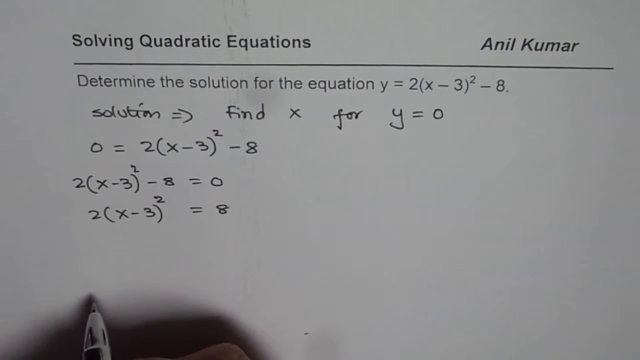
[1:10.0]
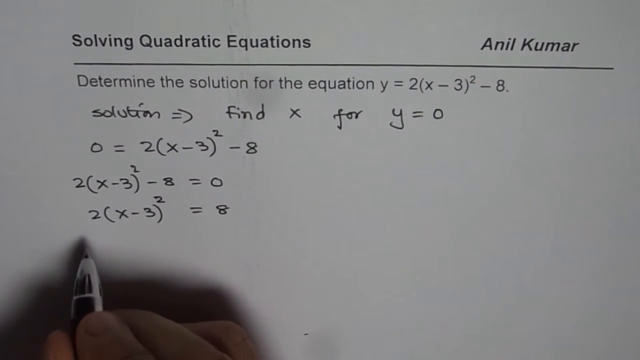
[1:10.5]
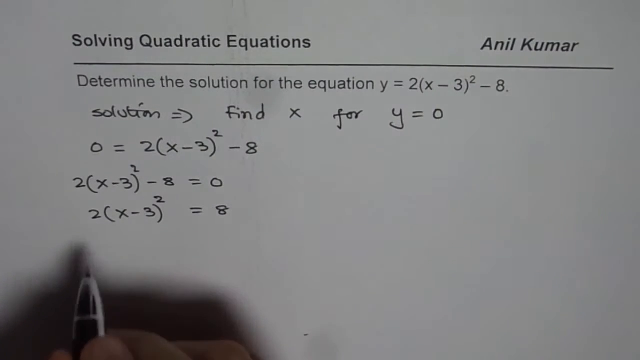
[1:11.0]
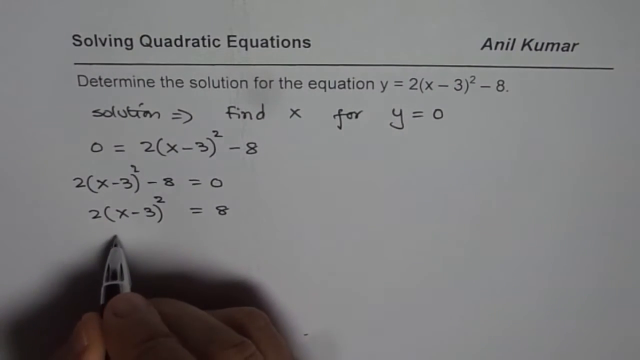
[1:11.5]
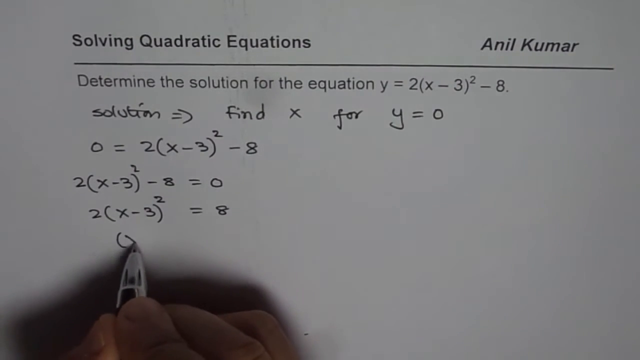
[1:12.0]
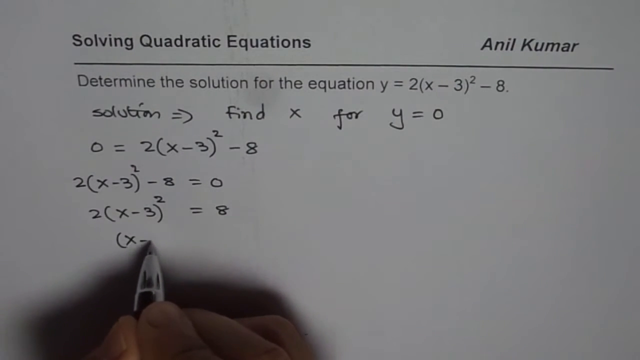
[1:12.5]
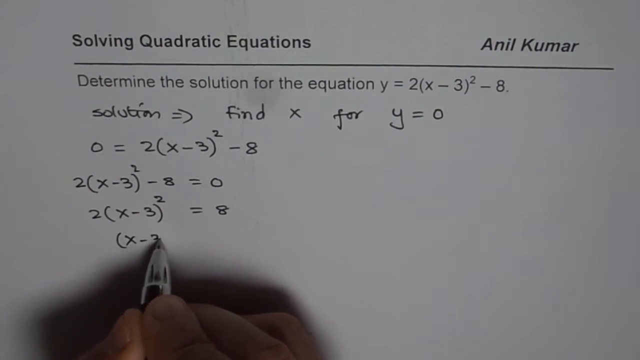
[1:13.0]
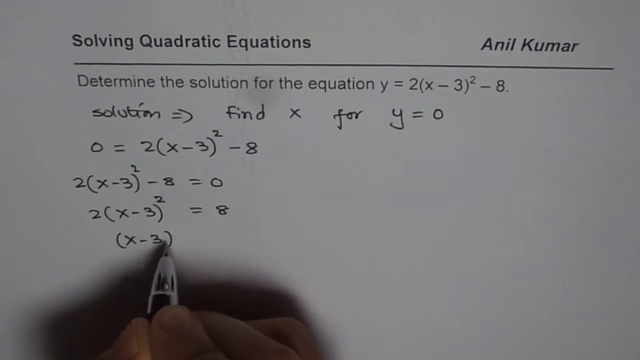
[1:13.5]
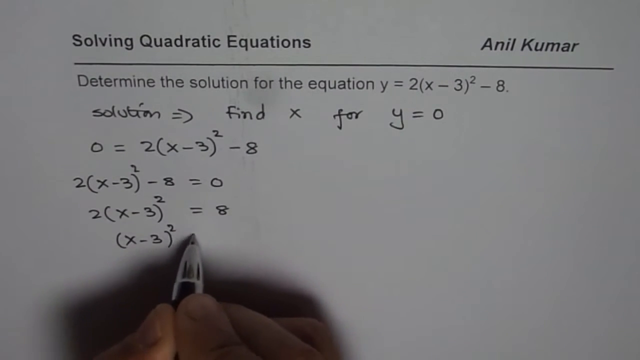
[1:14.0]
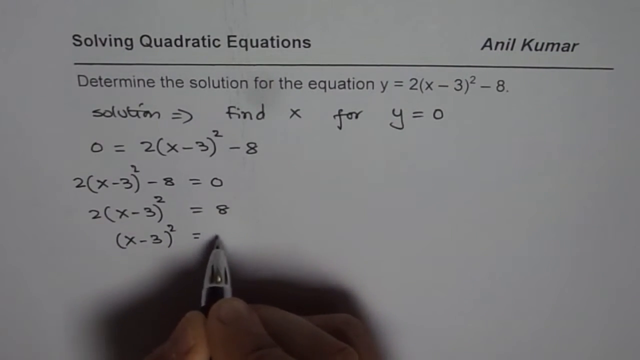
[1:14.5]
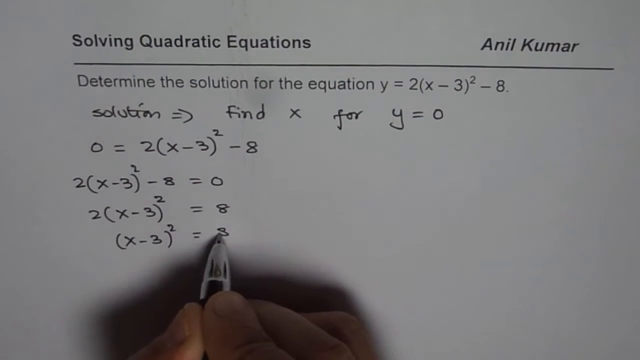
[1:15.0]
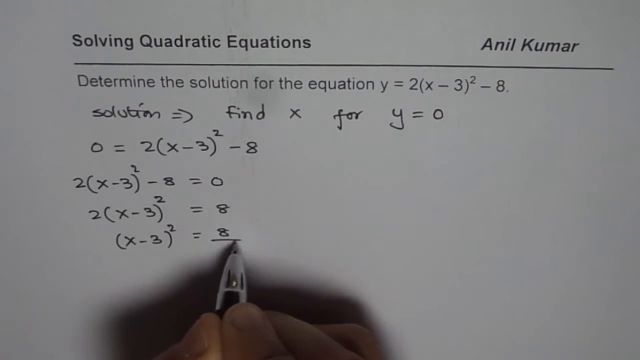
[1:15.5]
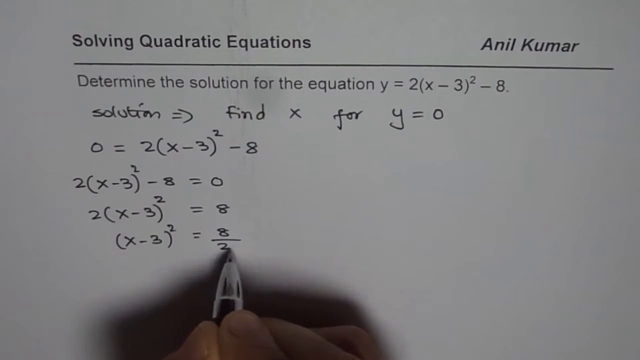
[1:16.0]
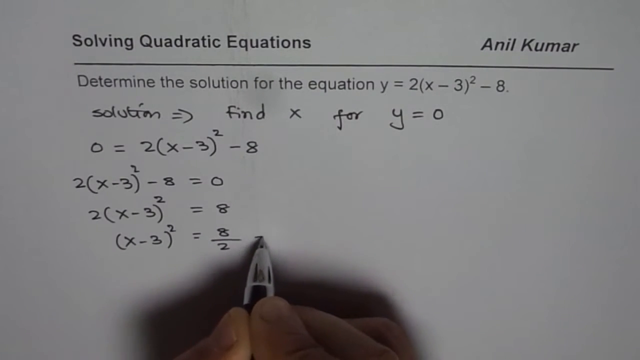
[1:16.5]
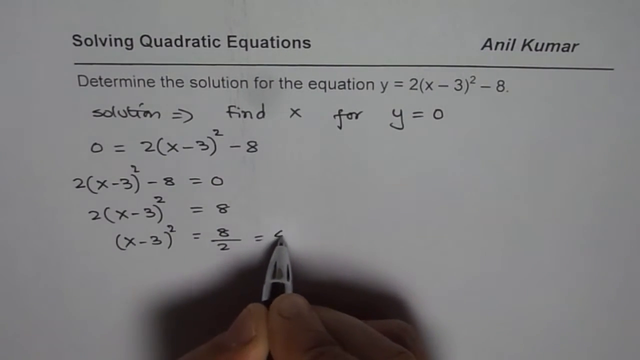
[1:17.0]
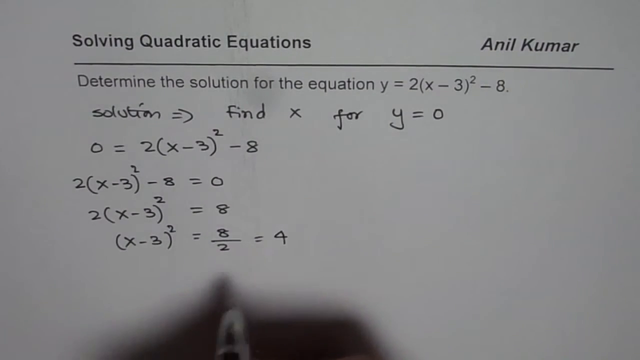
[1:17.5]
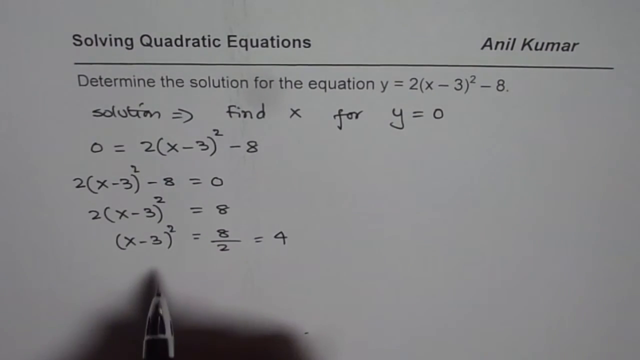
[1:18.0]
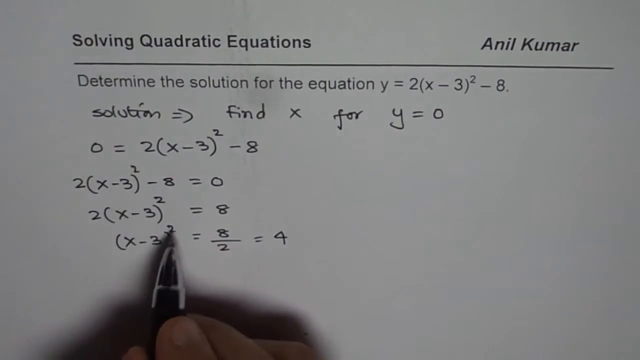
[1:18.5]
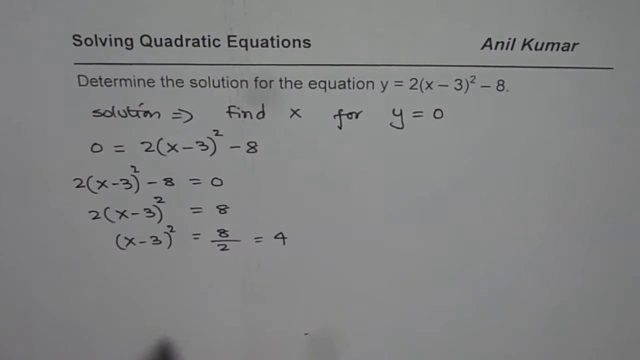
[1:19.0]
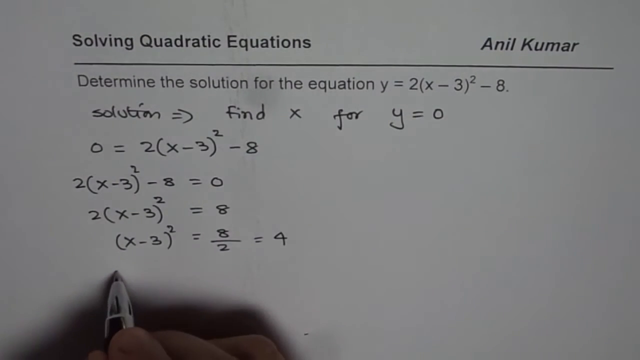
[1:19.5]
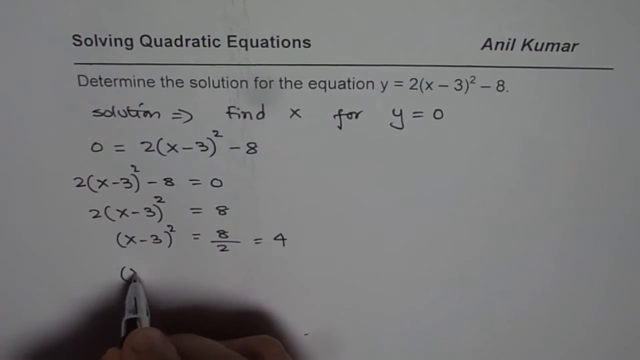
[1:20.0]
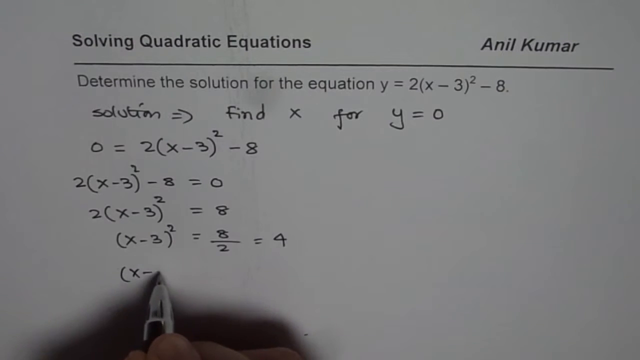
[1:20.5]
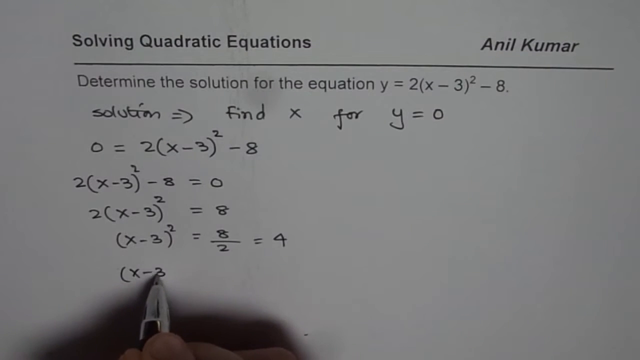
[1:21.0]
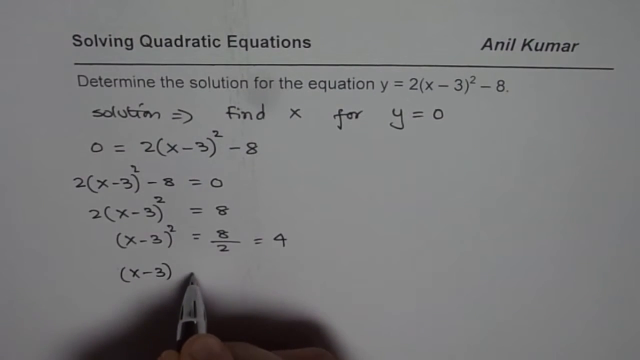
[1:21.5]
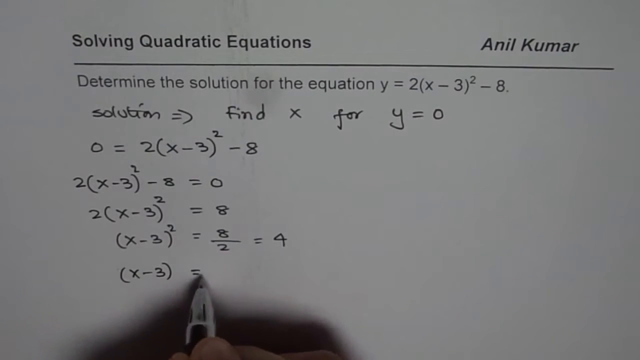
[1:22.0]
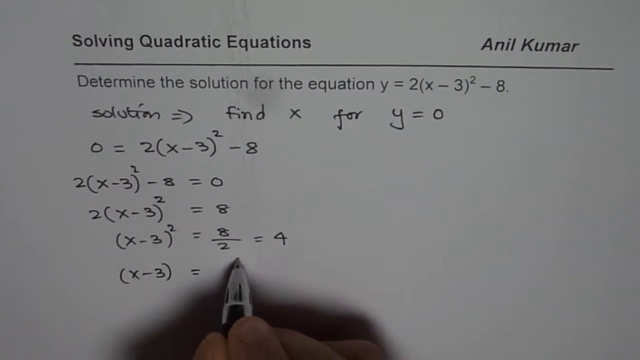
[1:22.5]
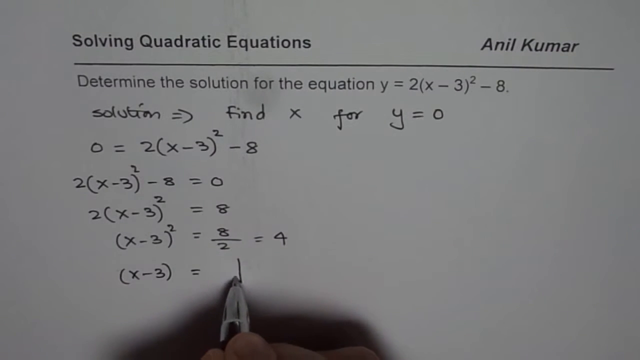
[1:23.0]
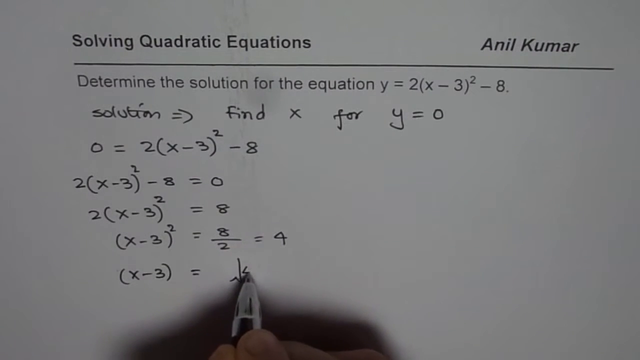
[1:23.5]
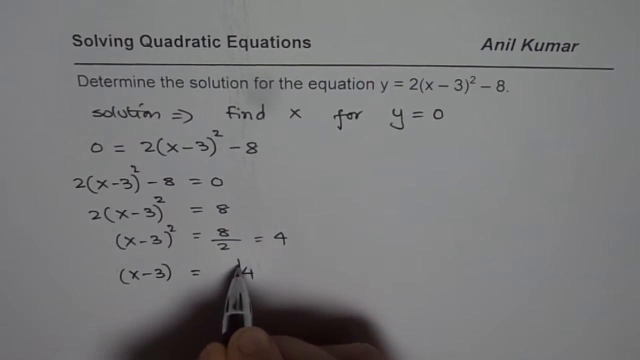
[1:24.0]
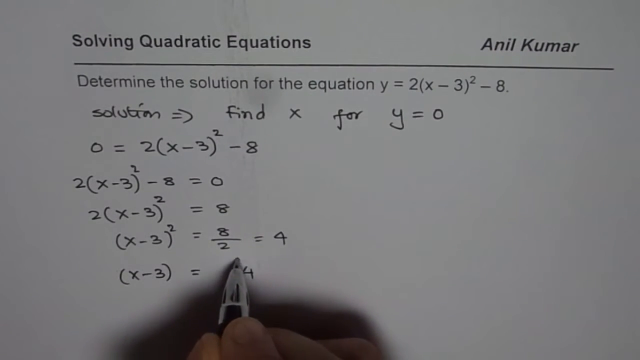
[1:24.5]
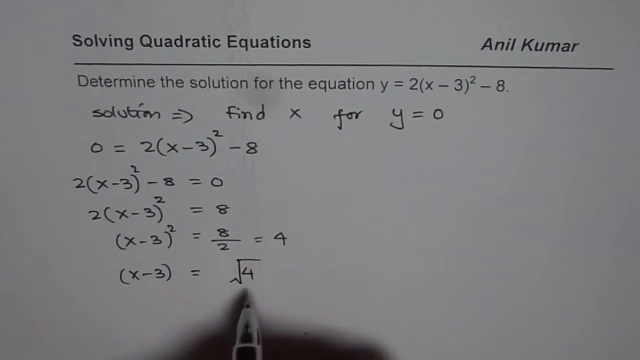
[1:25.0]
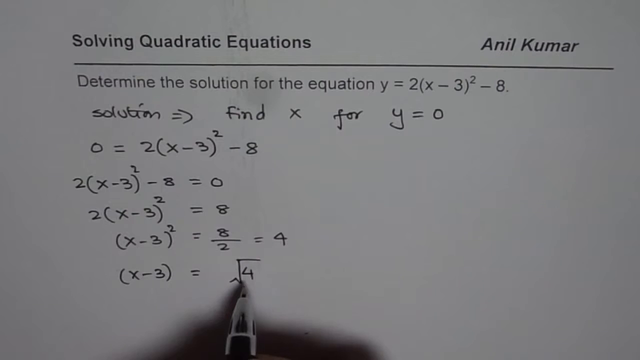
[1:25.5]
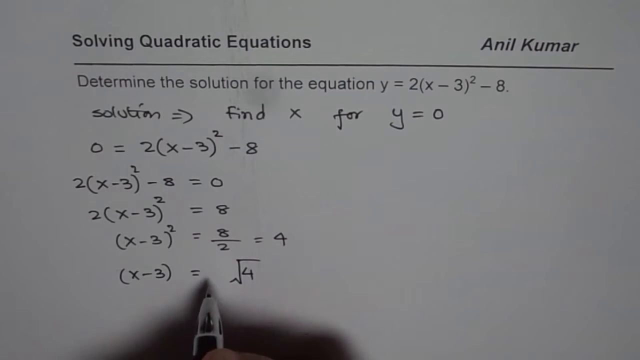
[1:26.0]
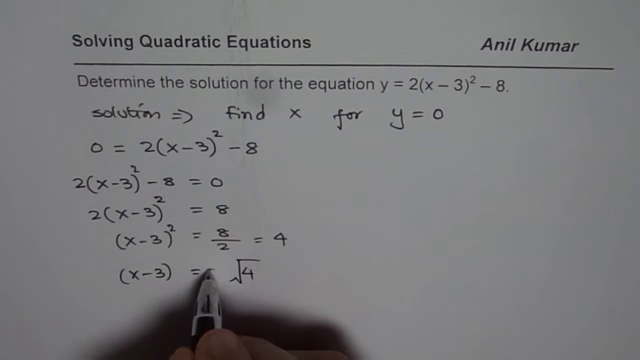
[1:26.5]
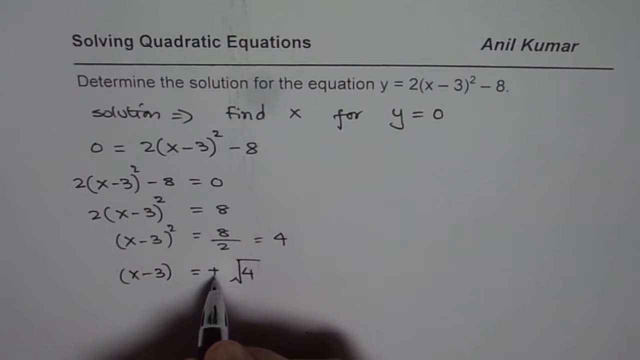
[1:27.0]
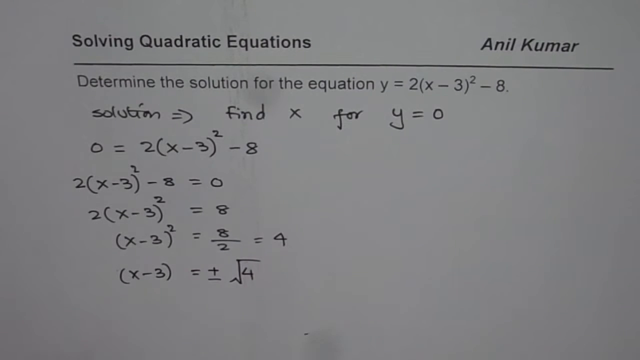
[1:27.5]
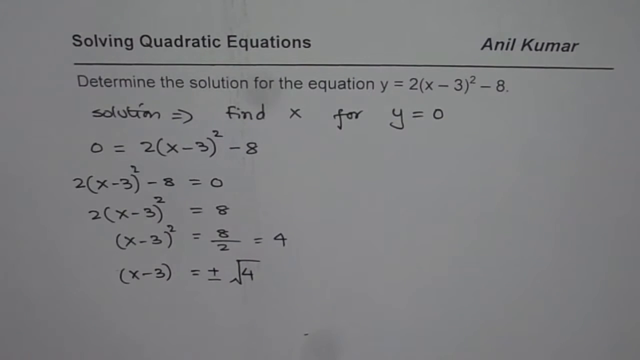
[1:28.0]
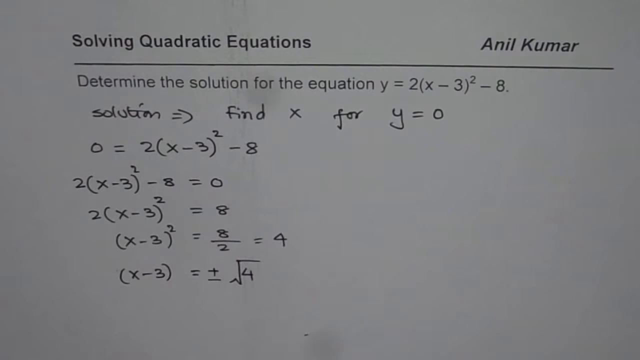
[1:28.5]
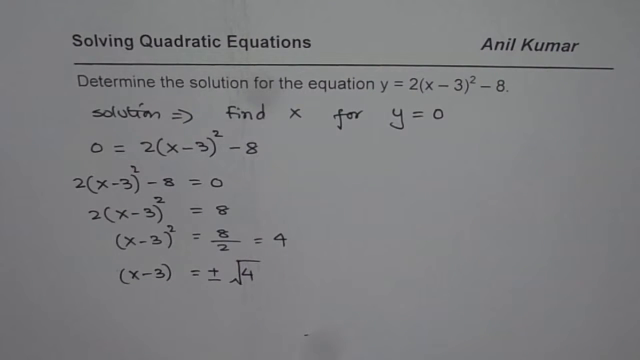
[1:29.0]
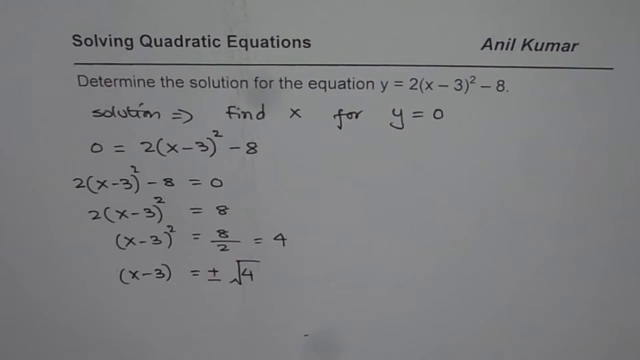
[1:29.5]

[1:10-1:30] The paper shows the heading, the name, the equation "y = 2(x − 3)² − 8", "0 = 2(x − 3)² − 8", "2(x − 3)² − 8 = 0", "2(x − 3)² = 8", and then "(x − 3)² = 8/2 = 4". A man's hand holding a black pen writes these steps on the white page. He is not finished and continues writing the next line, which begins with "x − 3".